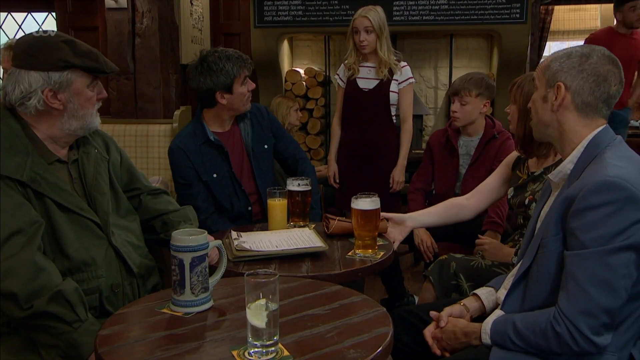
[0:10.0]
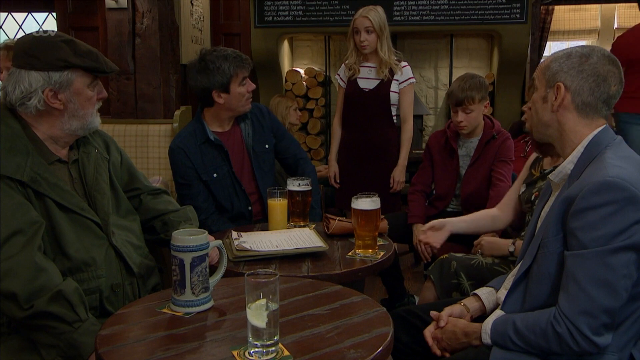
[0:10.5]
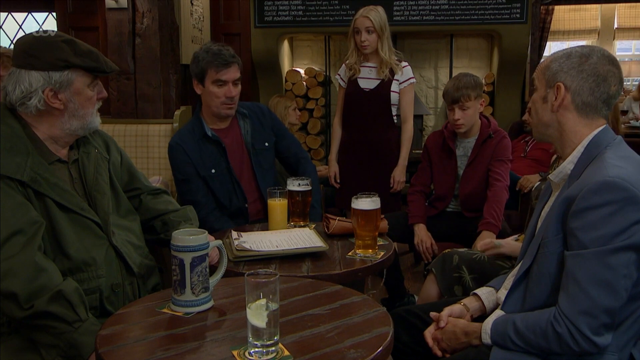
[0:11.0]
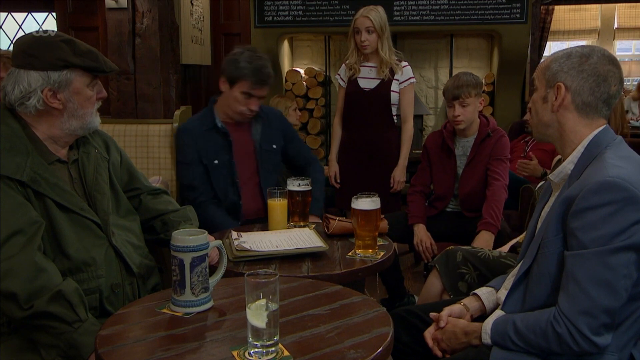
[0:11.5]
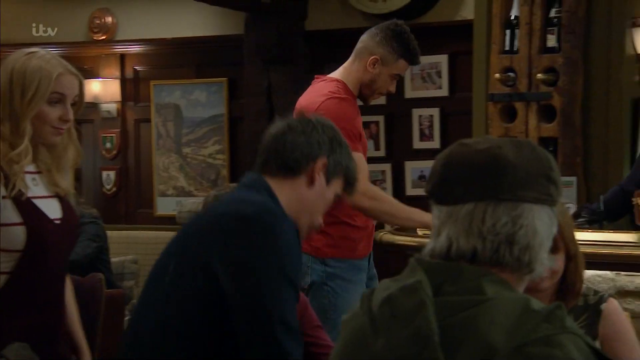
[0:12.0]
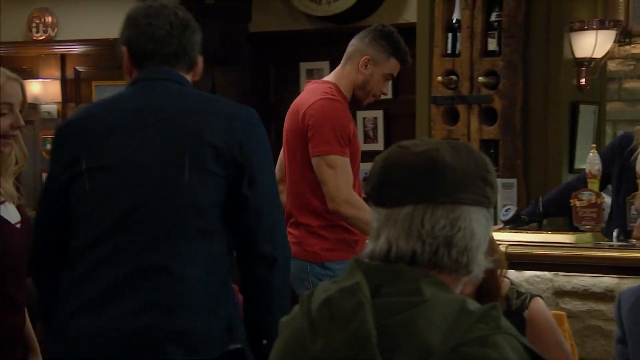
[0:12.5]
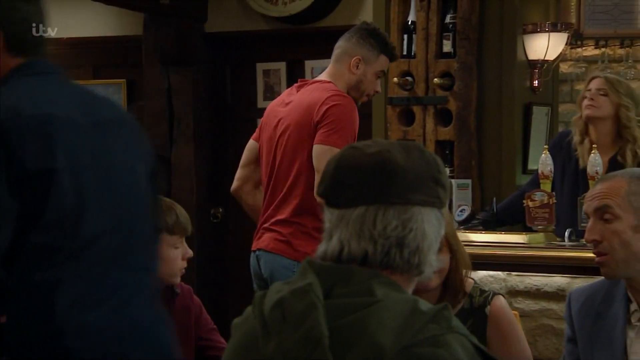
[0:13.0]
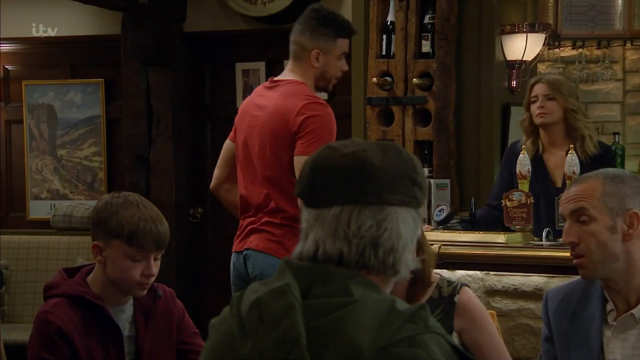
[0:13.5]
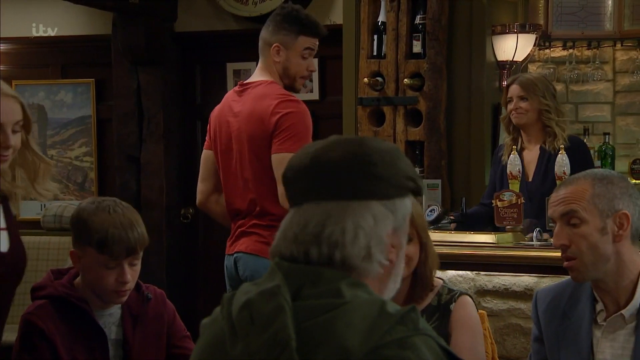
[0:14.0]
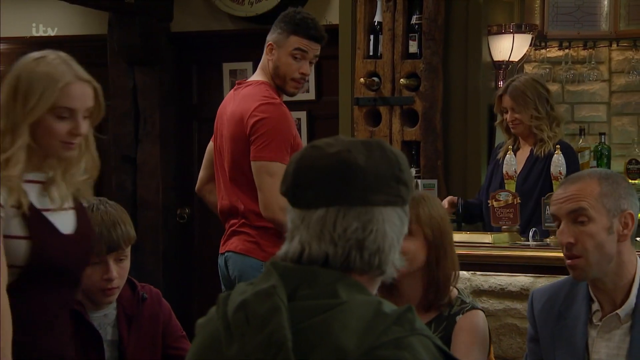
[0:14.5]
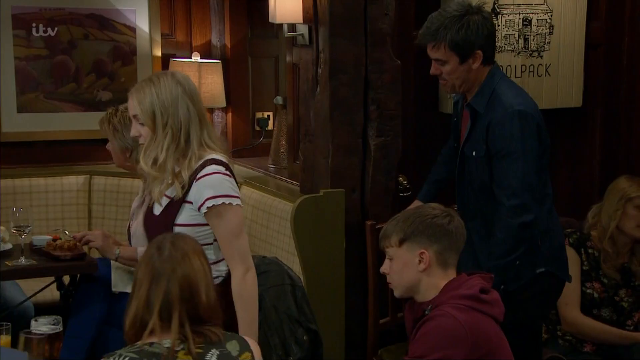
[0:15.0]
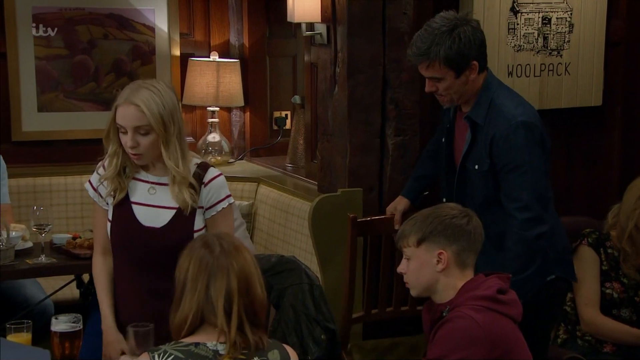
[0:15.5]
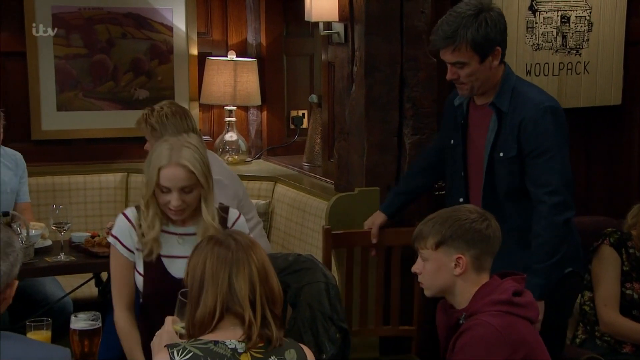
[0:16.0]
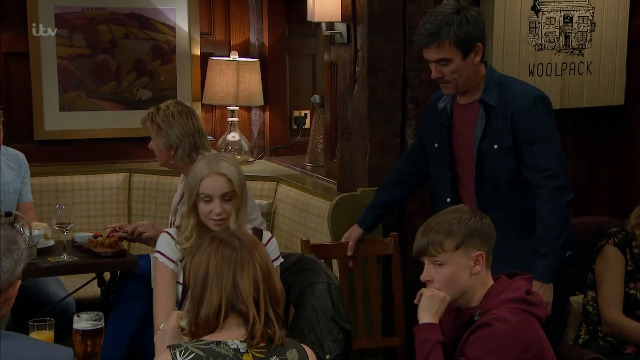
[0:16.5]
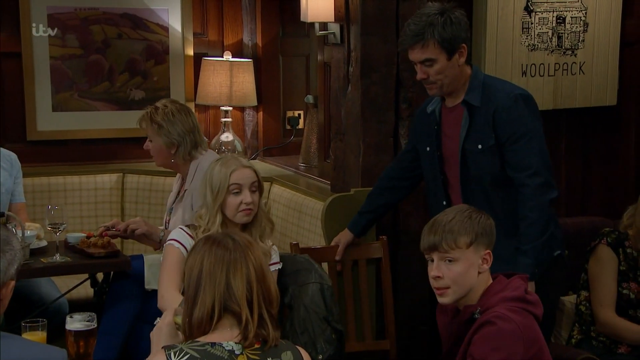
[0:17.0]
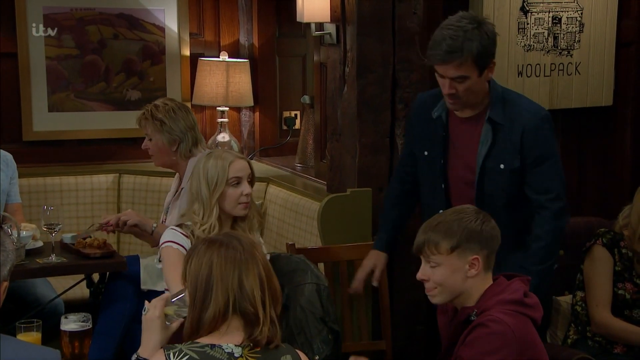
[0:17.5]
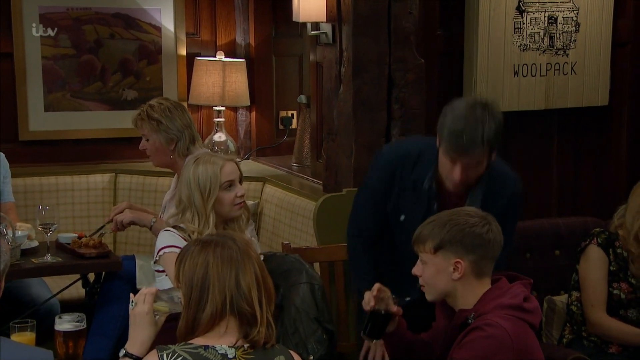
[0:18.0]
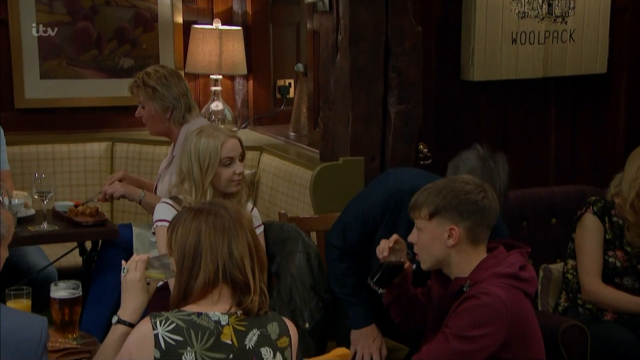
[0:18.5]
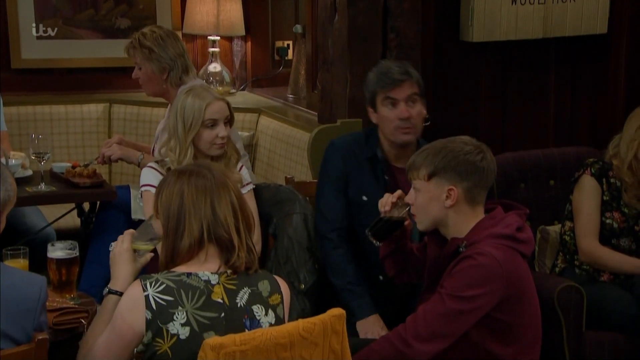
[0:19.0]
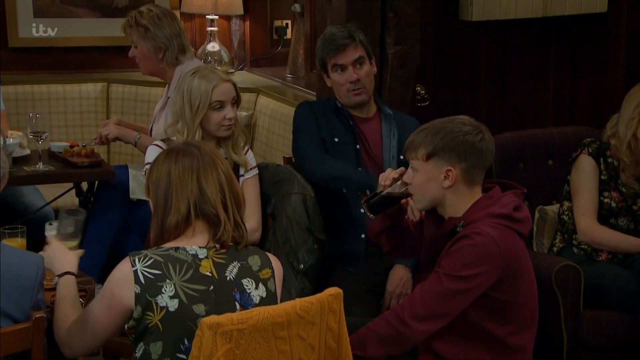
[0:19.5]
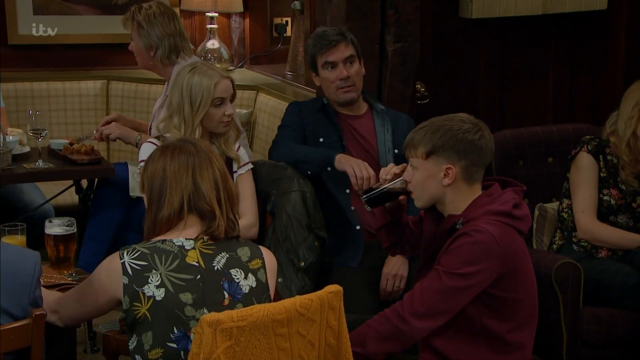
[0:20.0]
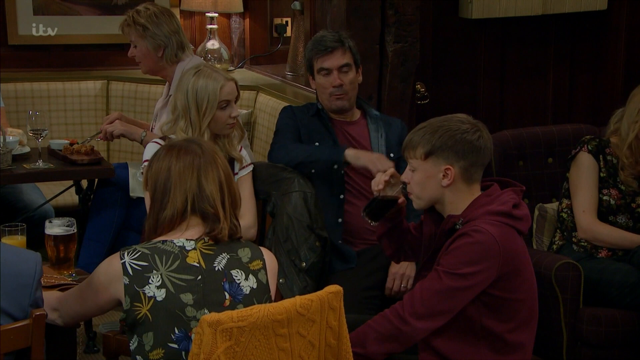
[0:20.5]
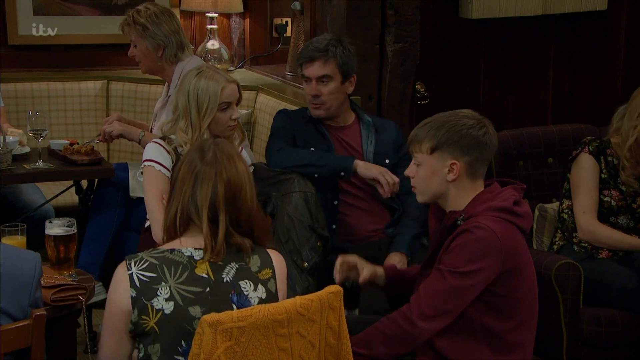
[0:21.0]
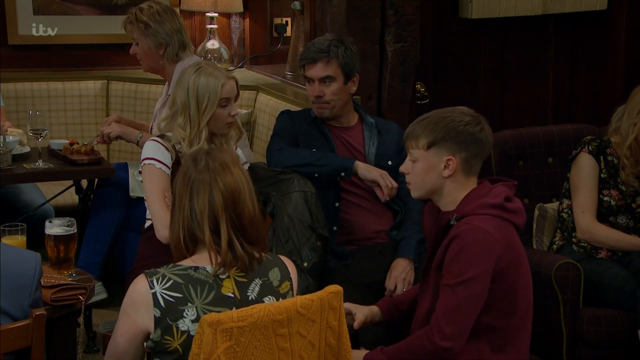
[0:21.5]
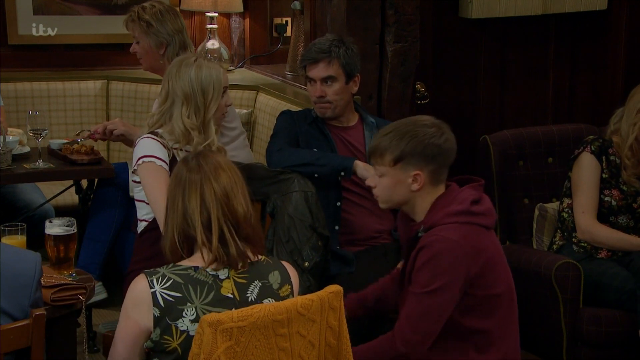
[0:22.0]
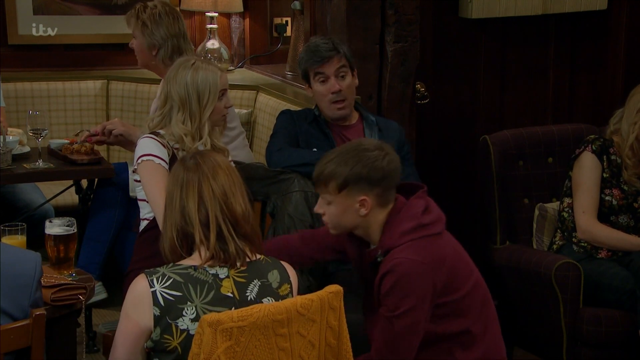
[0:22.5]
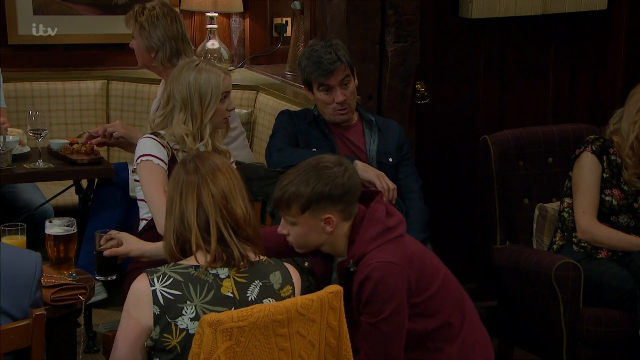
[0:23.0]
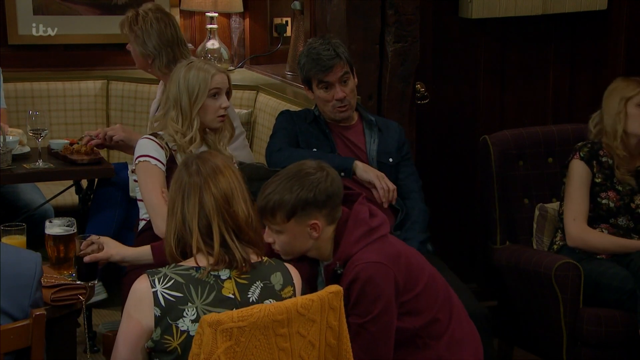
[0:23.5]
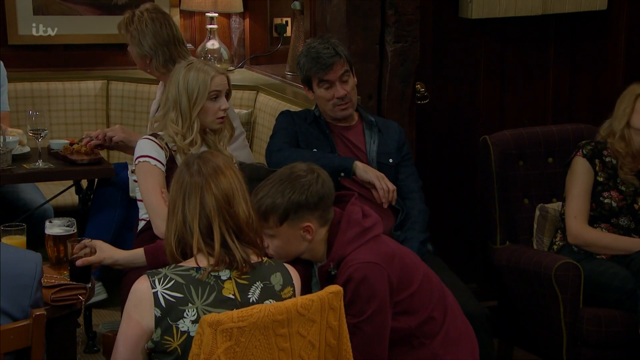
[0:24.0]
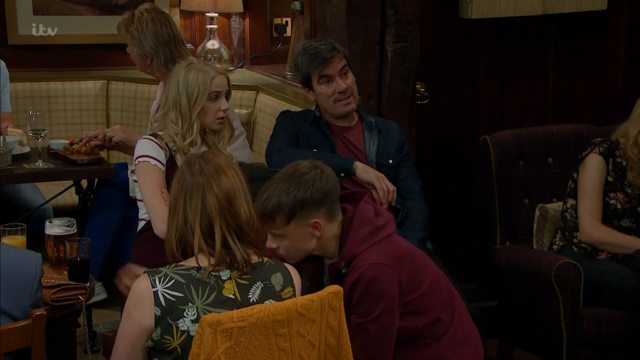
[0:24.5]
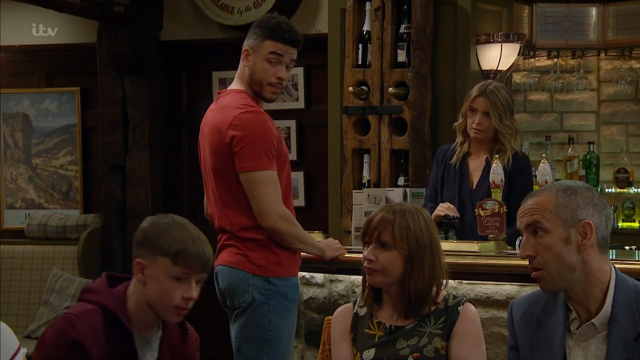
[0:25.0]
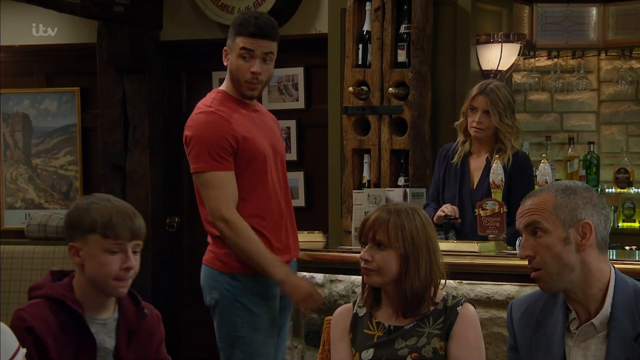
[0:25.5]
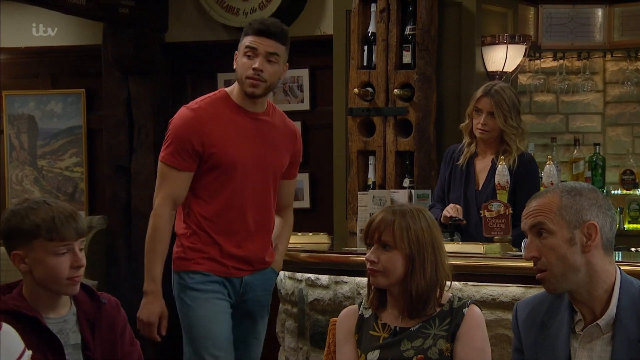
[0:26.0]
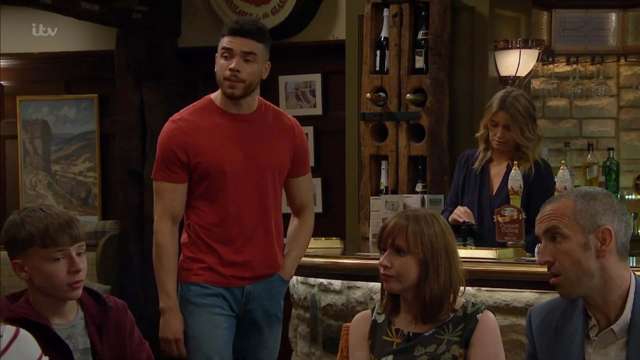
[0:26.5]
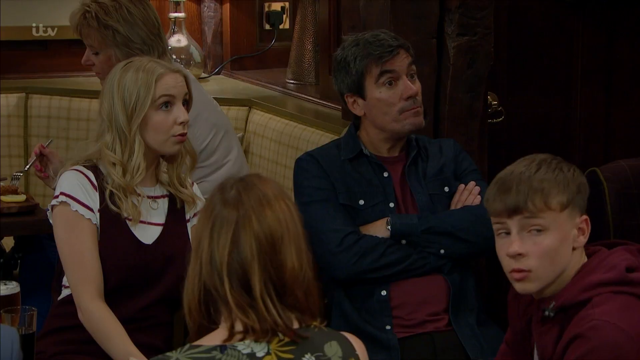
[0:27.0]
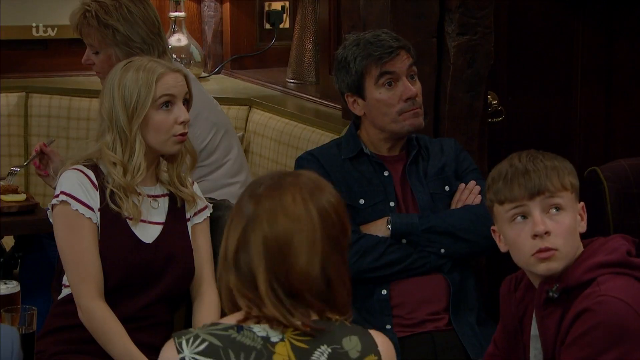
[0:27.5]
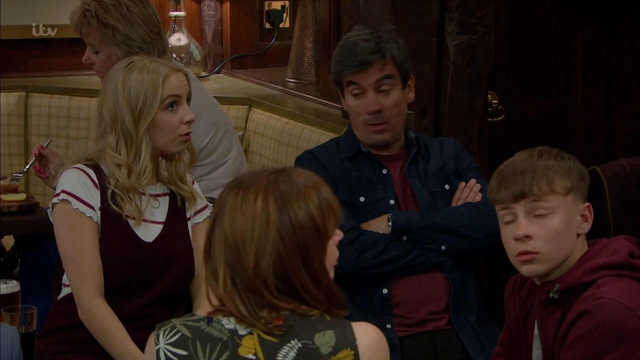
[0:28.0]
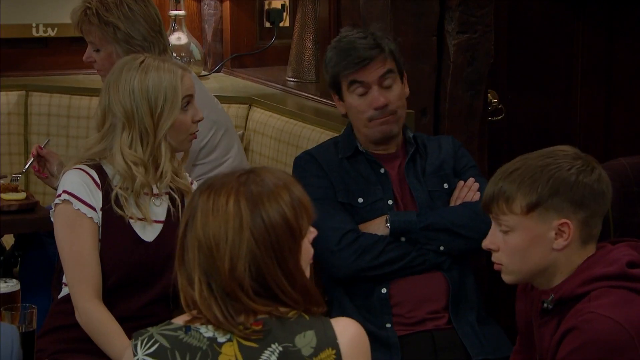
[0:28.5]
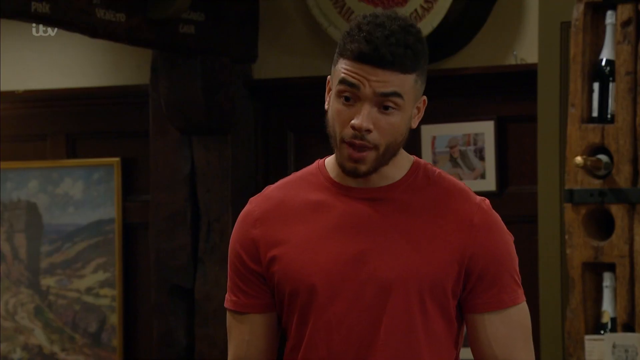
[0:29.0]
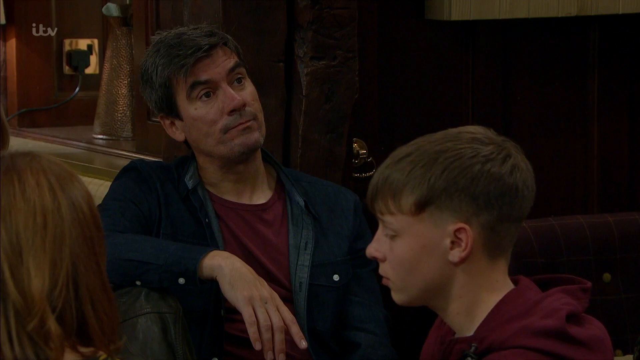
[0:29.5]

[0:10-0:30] The group of people is sitting in the bar. The man in the dark blue button-down shirt and red undershirt stands up from the table as the camera changes to a view from behind the group. A man in a red t-shirt approaches the bar and turns his head back toward the group behind him. The scene changes to show the woman in the dark red dress sitting down at the table. The man in the blue button-down shirt and red shirt sits down in a chair next to her, resting his right forearm against the back of a chair next to him, and has a conversation with the woman in the red dress. At the bar, the man in the red t-shirt and blue jeans turns around to address the group behind him, his left hand in his left pocket and his right arm down at his side. He takes a step toward the group. The man in the blue button-down shirt turns his head toward the blonde woman sitting next to him as he answers a question. The man in the red t-shirt responds, and the man in the blue button-down shirt responds.